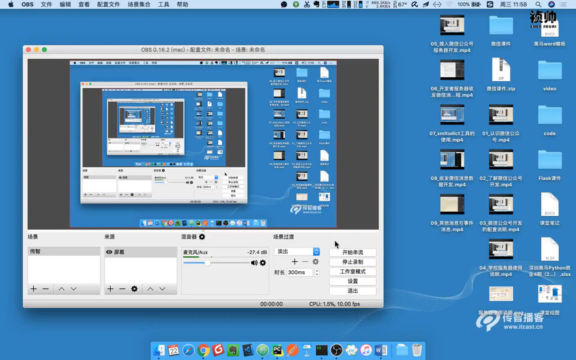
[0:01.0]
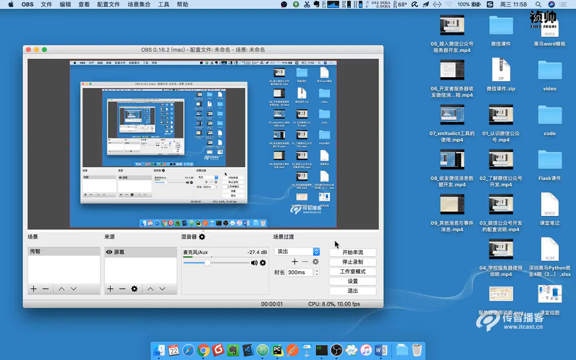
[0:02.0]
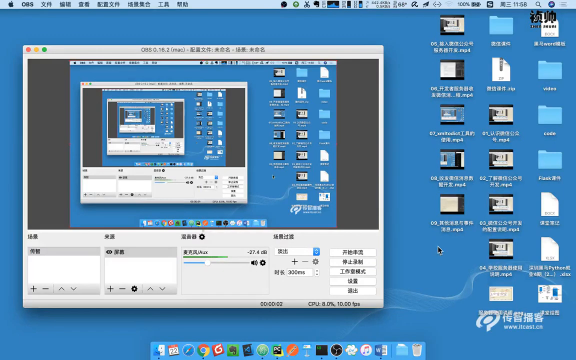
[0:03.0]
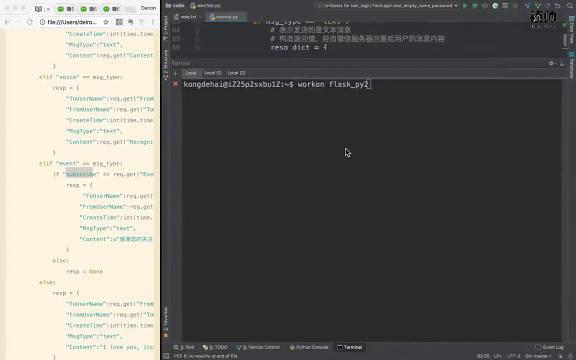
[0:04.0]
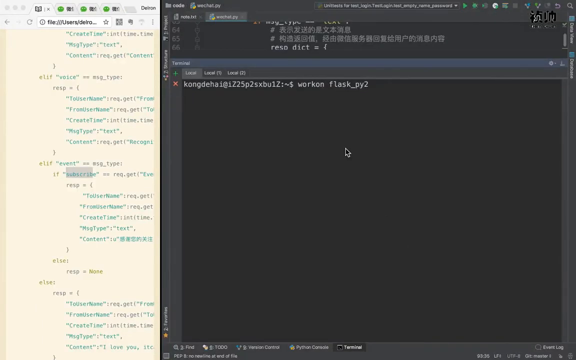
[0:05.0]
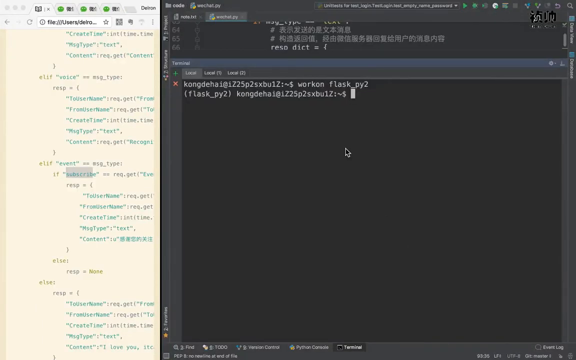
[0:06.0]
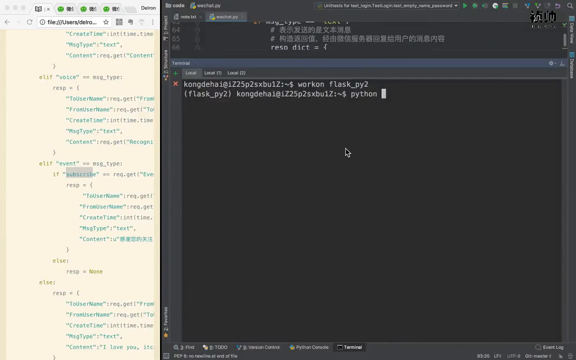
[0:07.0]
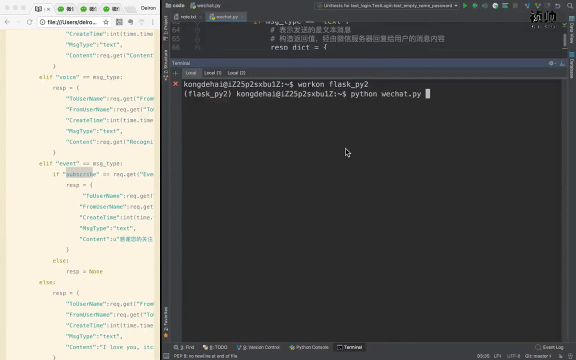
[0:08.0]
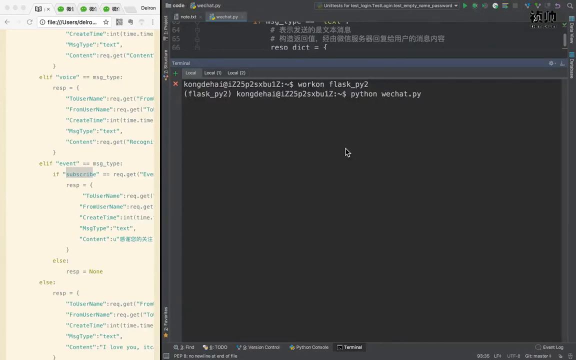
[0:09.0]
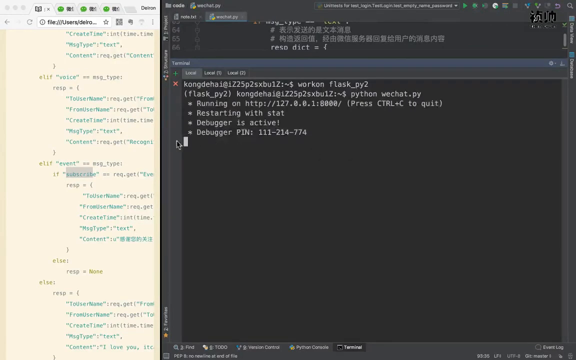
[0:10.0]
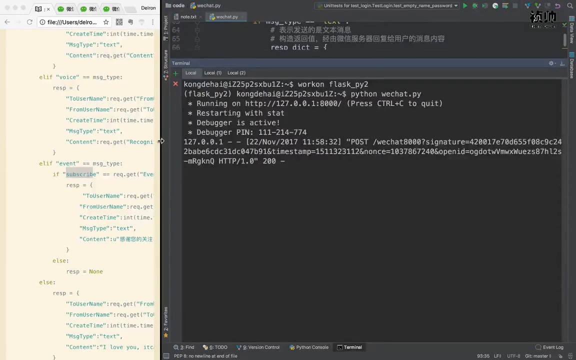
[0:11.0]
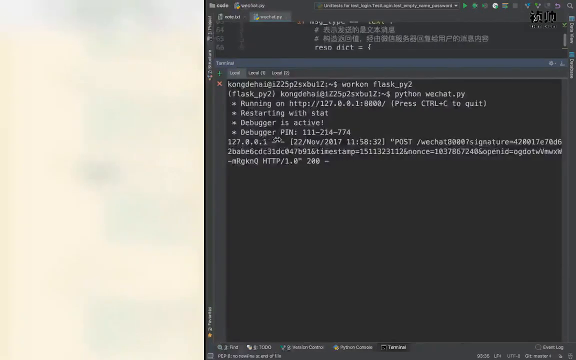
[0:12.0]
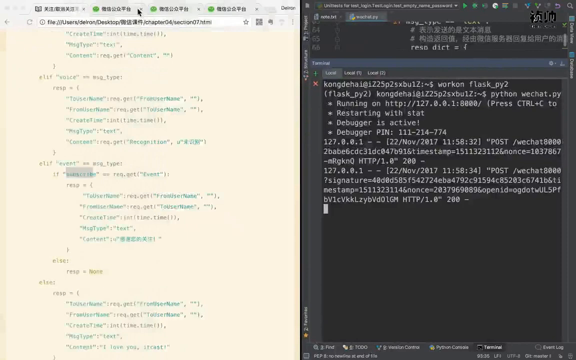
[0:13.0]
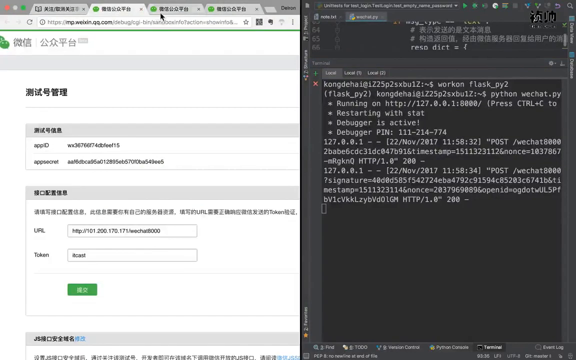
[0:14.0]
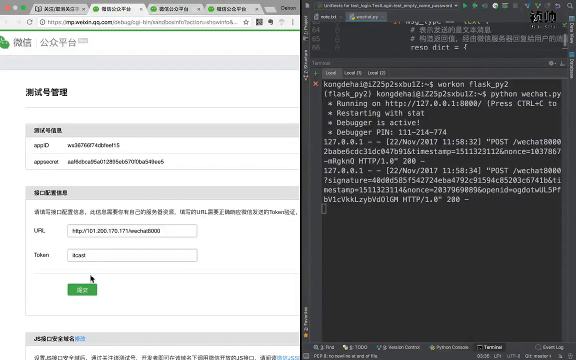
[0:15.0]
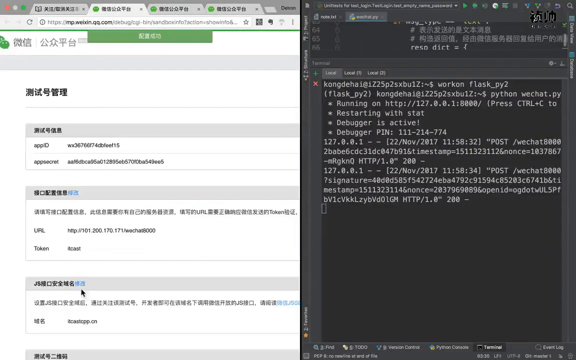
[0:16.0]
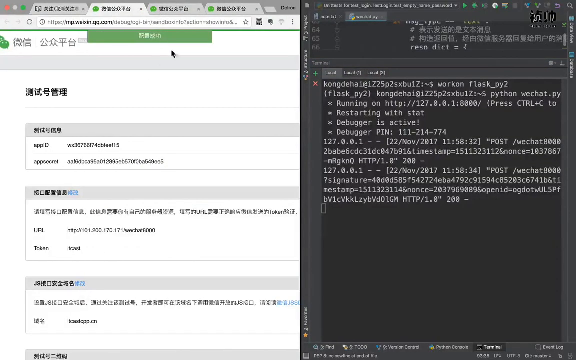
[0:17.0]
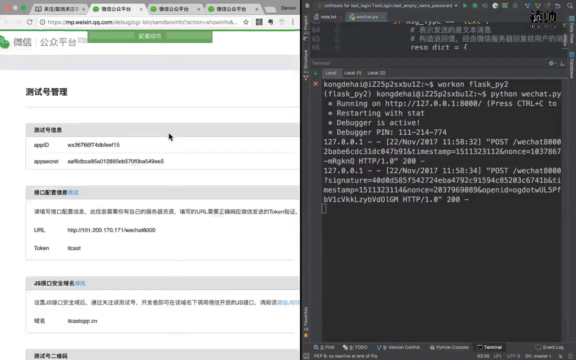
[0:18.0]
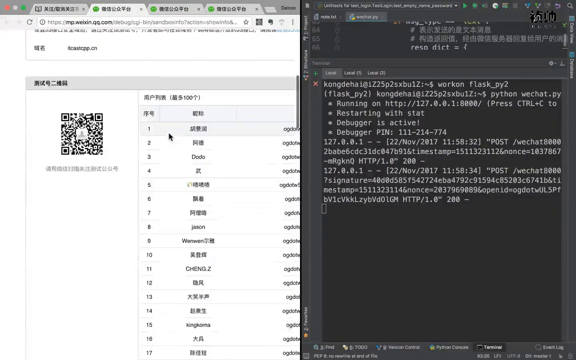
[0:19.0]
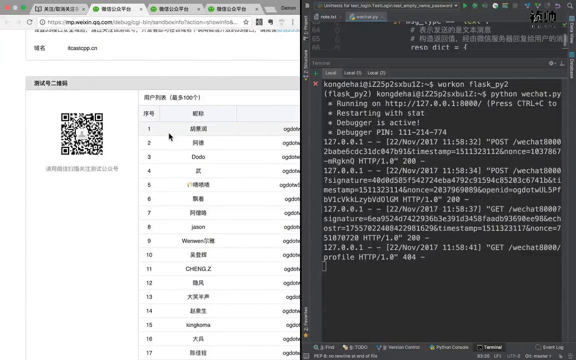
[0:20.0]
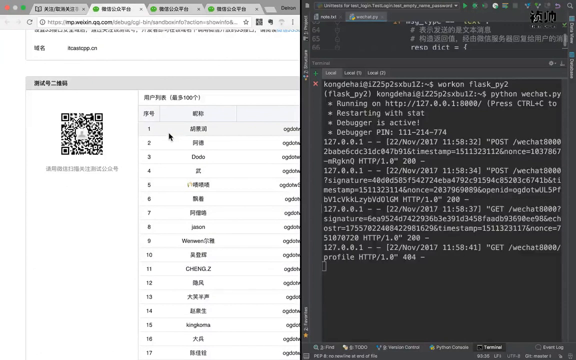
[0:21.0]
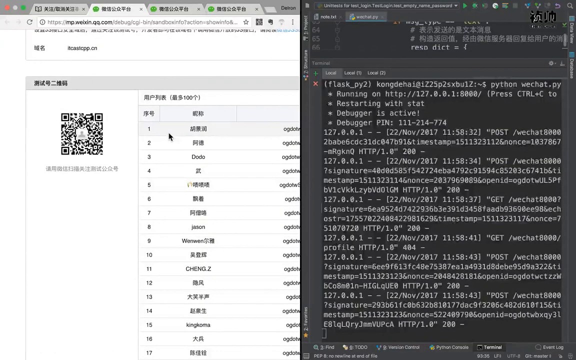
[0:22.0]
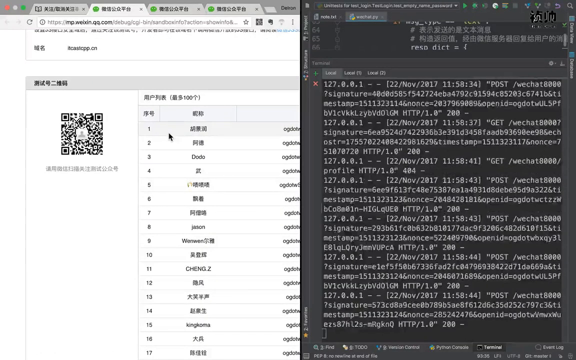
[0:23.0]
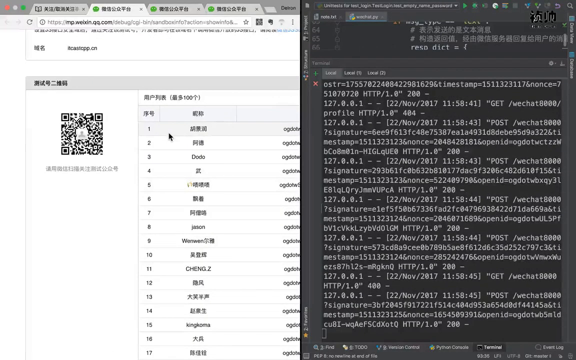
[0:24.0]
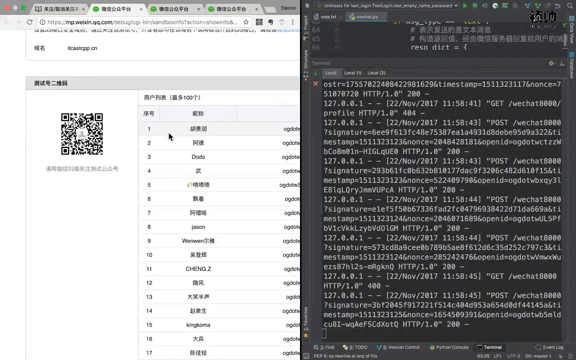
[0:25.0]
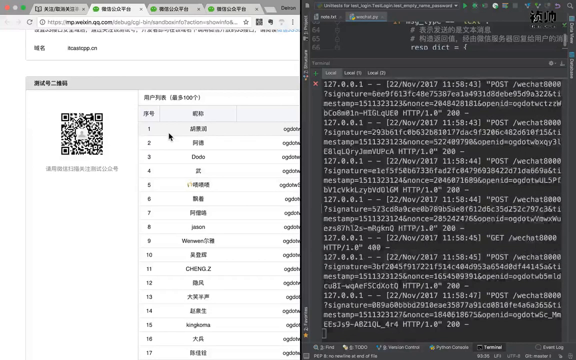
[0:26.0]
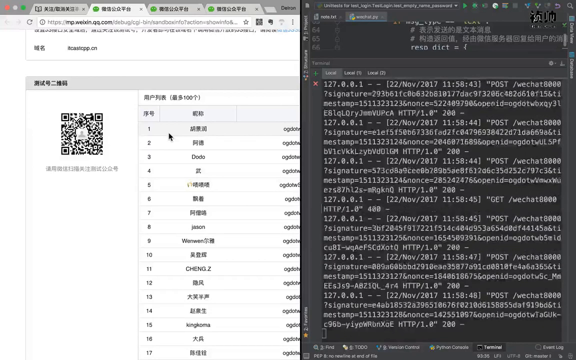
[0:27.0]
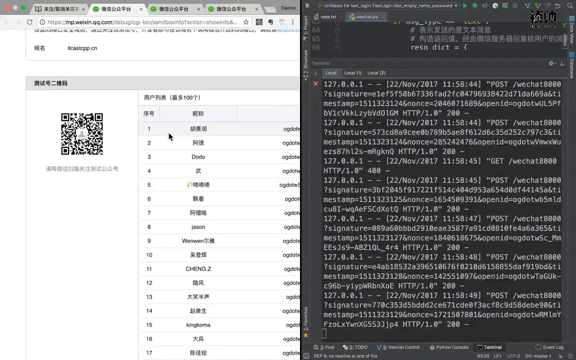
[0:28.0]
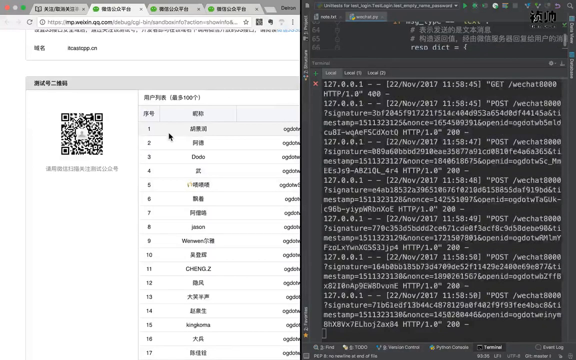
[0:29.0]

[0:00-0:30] A person is recording their computer screen, apparently in an Asian country, since a lot of Chinese text is visible, especially in the open OBS Studio window, which has a lot of Chinese text after the name of the software. On the right, a homepage window shows many shortcuts, also with a lot of Chinese text. The person then goes into what looks like some sort of coding or Python window containing a lot of code. He appears to type in a bit of code but mostly copies and pastes. Some sort of debugger then becomes active, and there is some activity on the left side. He goes to a website and starts clicking on it, moving through what look like various codes.